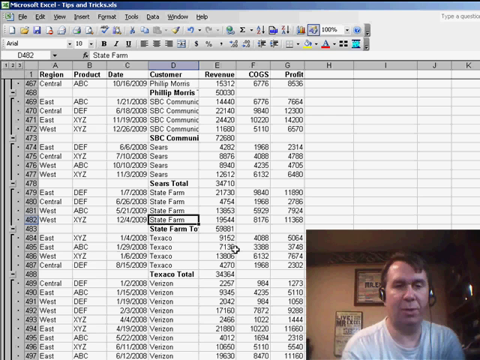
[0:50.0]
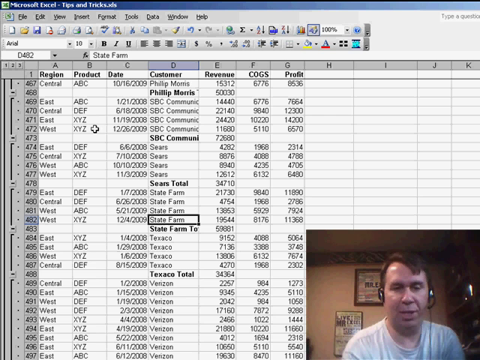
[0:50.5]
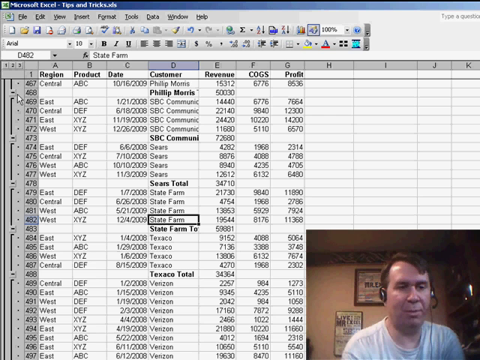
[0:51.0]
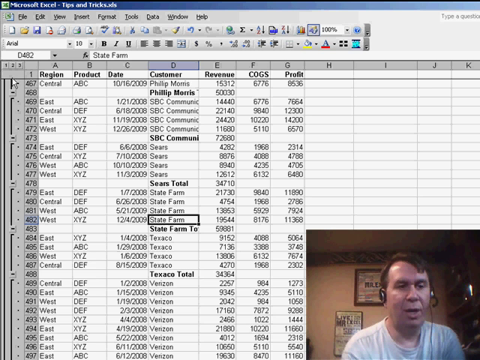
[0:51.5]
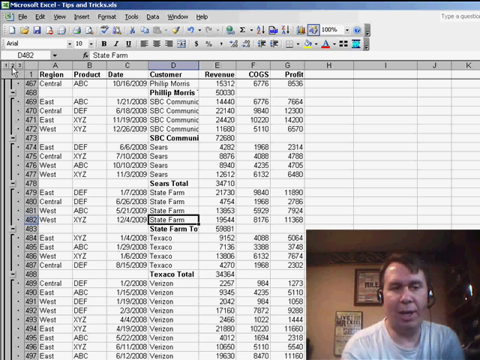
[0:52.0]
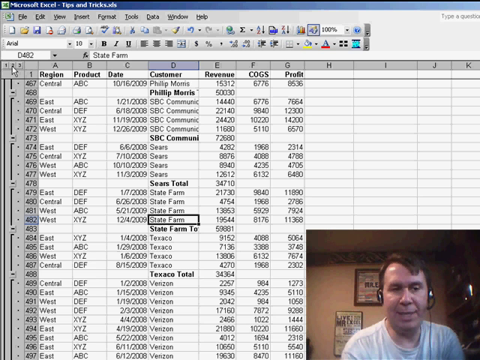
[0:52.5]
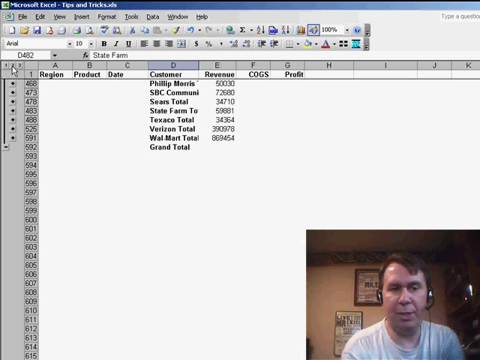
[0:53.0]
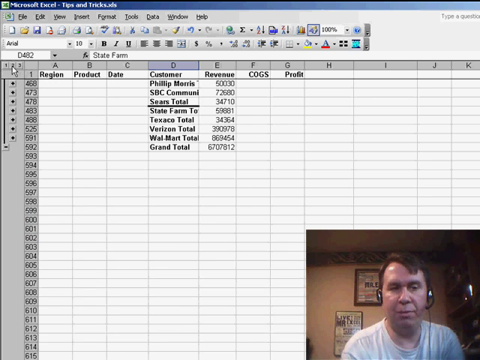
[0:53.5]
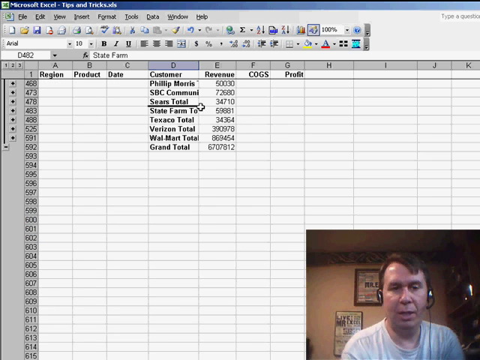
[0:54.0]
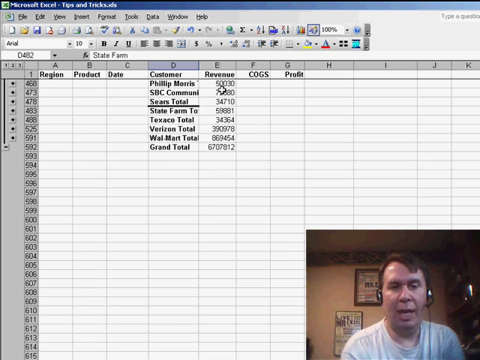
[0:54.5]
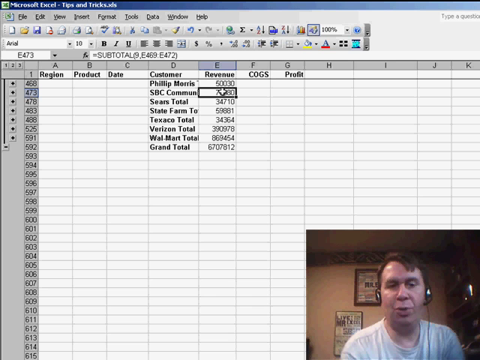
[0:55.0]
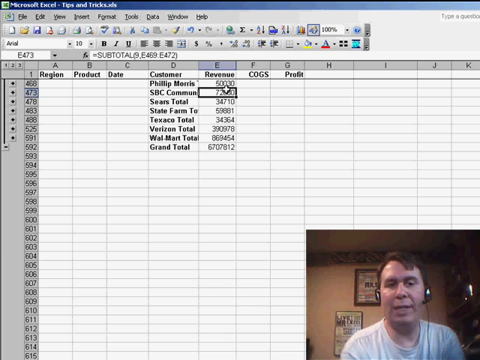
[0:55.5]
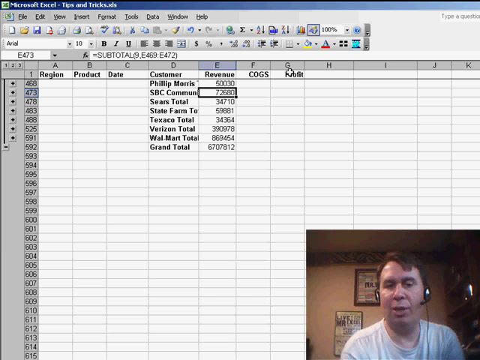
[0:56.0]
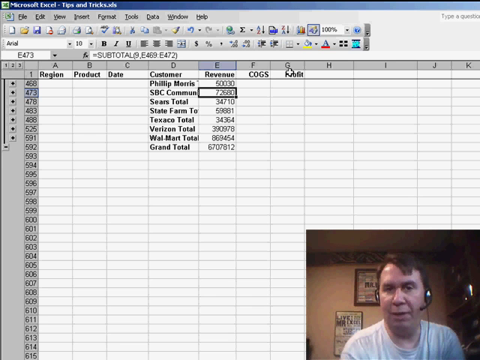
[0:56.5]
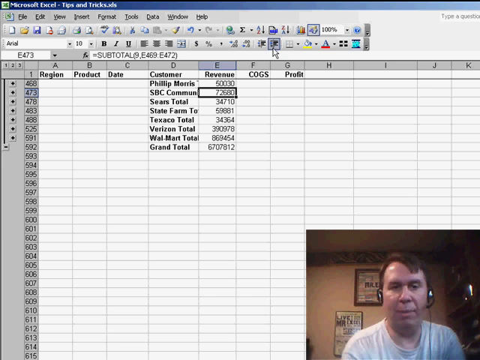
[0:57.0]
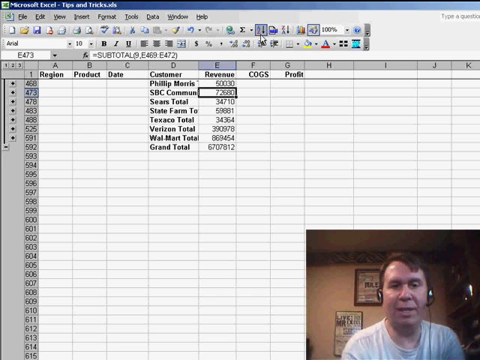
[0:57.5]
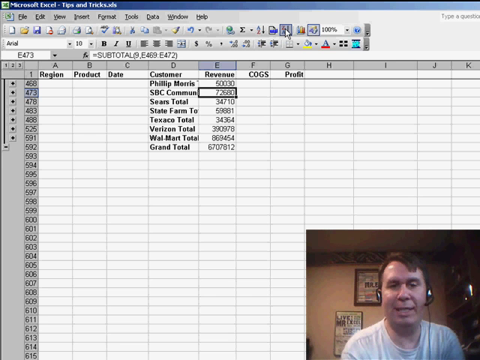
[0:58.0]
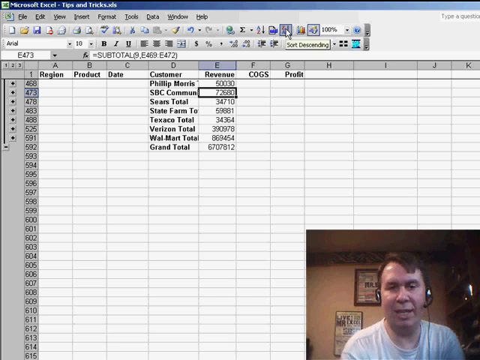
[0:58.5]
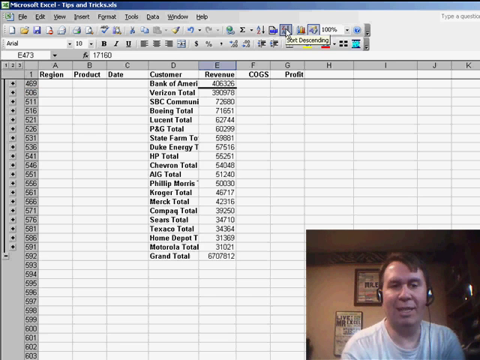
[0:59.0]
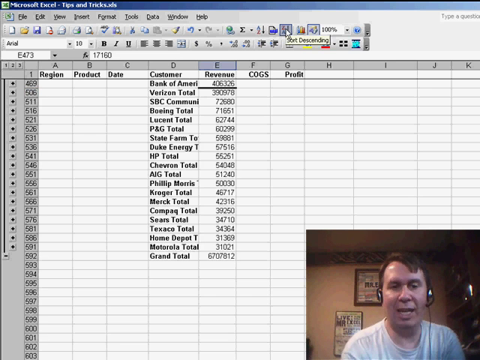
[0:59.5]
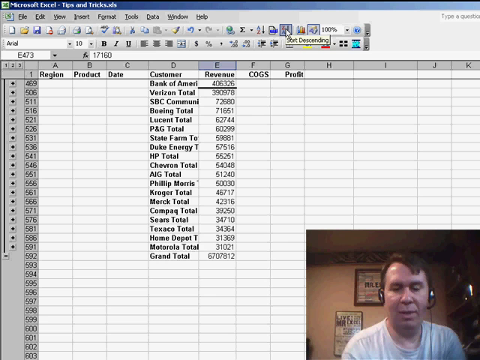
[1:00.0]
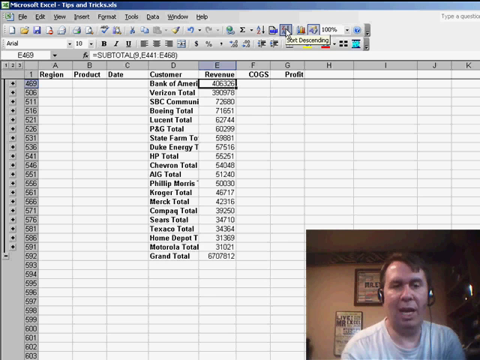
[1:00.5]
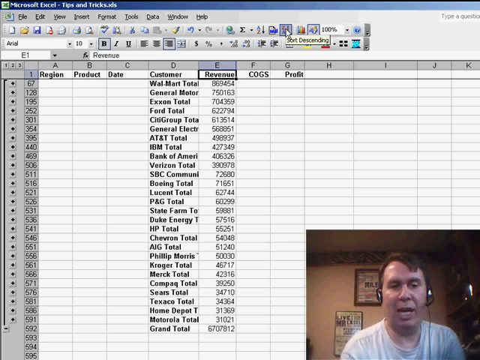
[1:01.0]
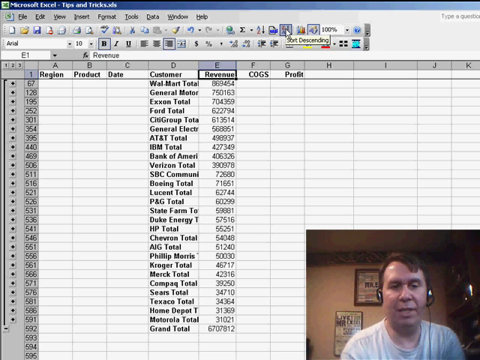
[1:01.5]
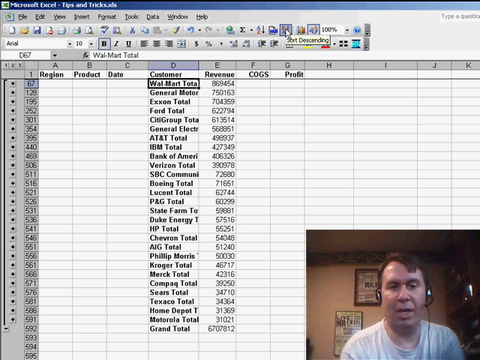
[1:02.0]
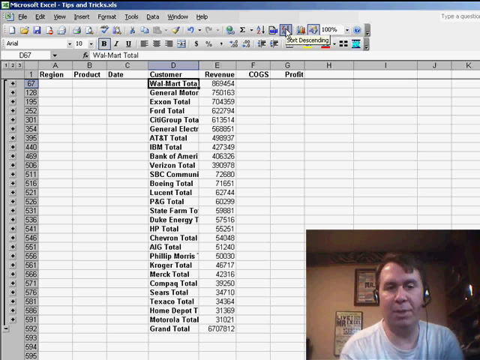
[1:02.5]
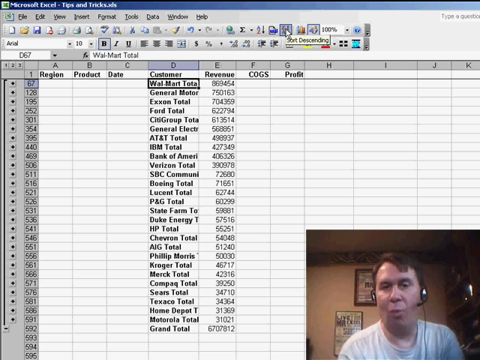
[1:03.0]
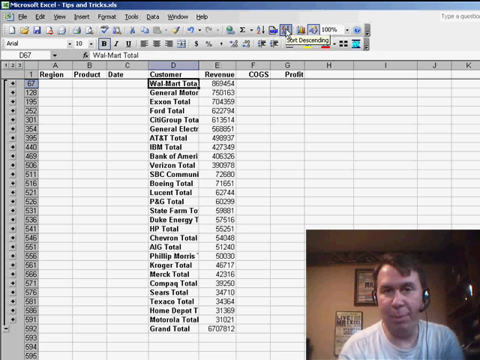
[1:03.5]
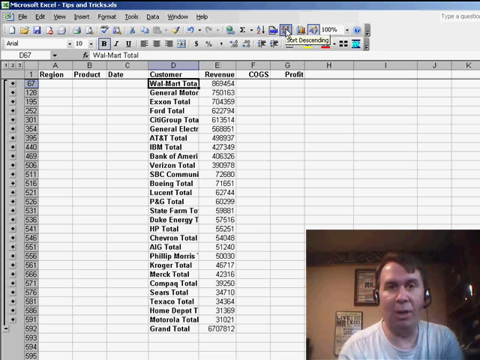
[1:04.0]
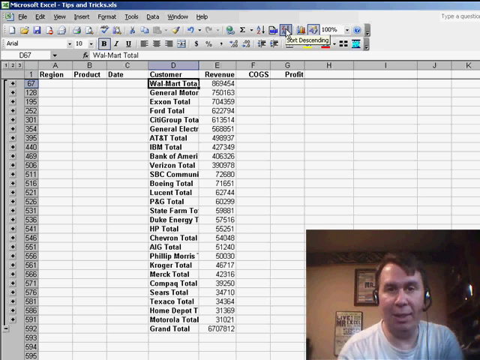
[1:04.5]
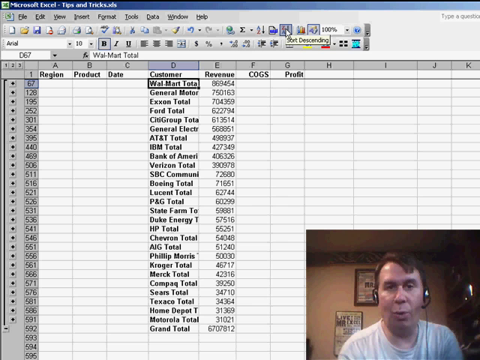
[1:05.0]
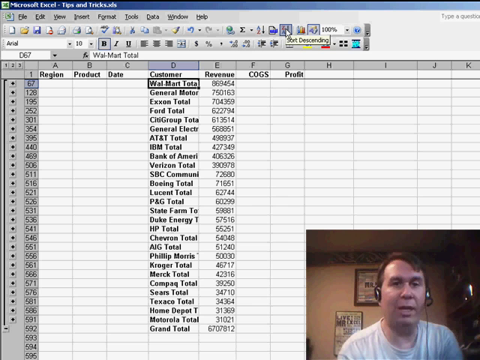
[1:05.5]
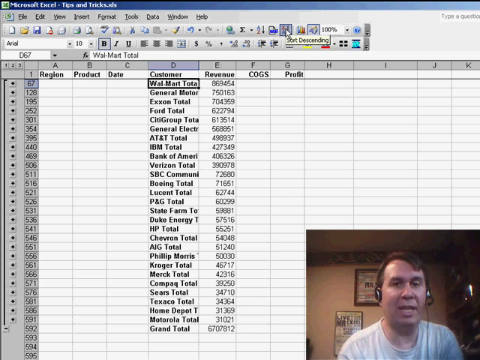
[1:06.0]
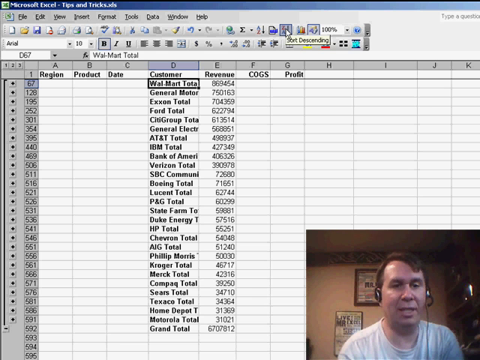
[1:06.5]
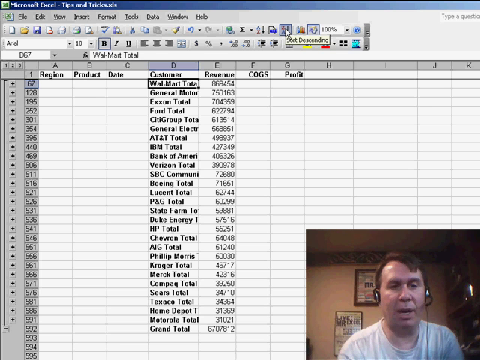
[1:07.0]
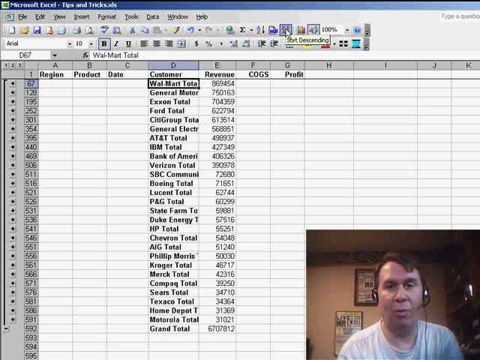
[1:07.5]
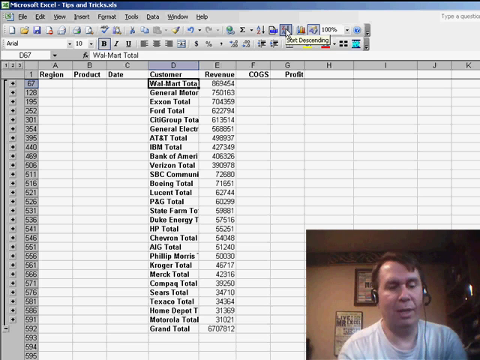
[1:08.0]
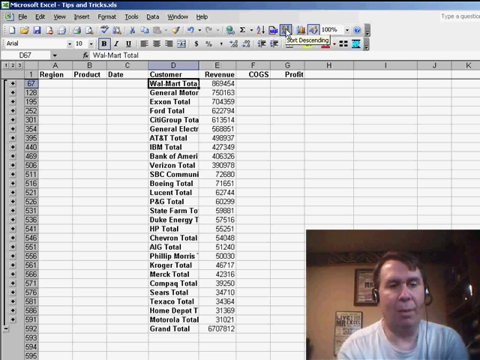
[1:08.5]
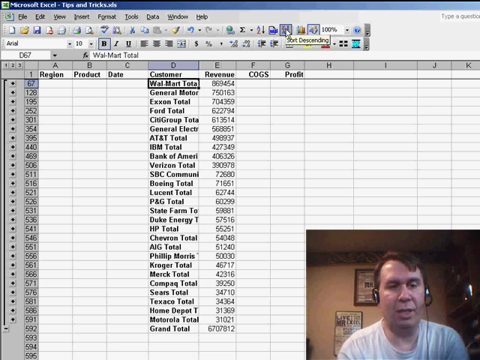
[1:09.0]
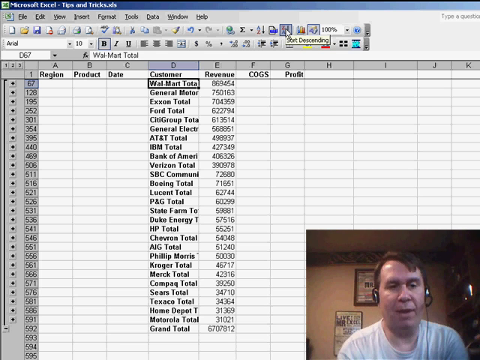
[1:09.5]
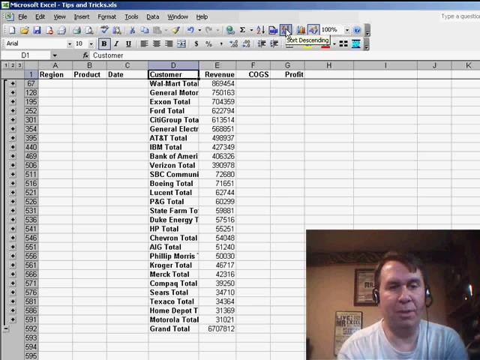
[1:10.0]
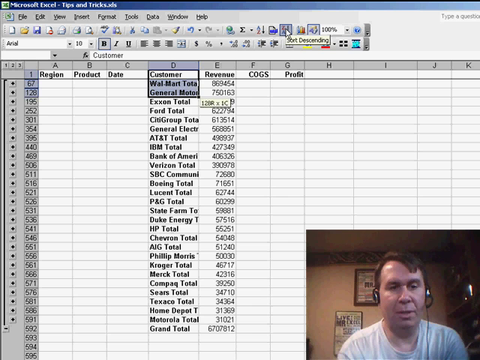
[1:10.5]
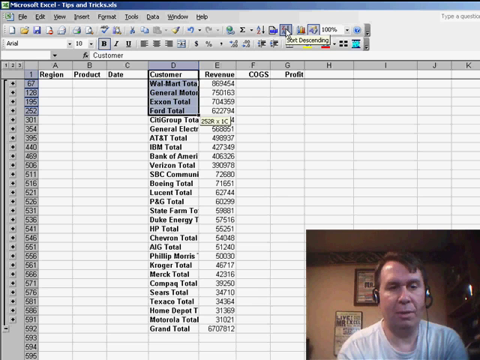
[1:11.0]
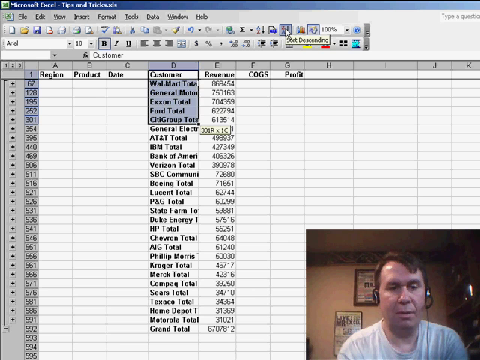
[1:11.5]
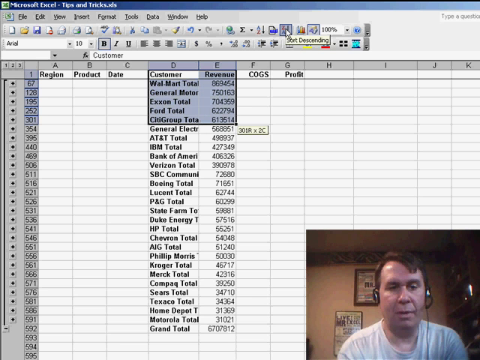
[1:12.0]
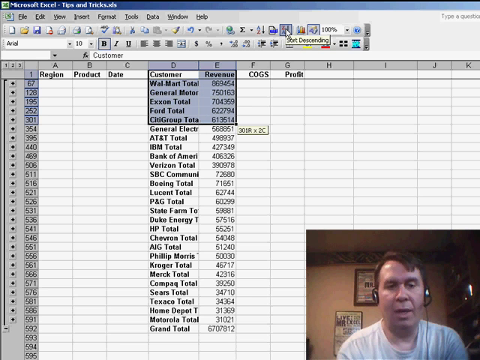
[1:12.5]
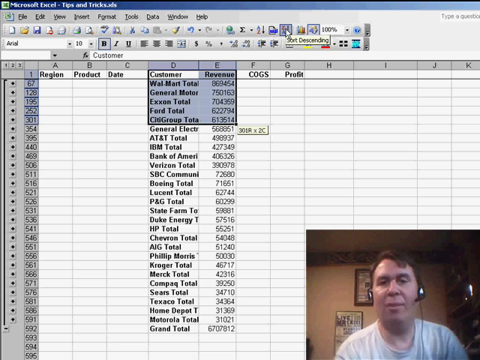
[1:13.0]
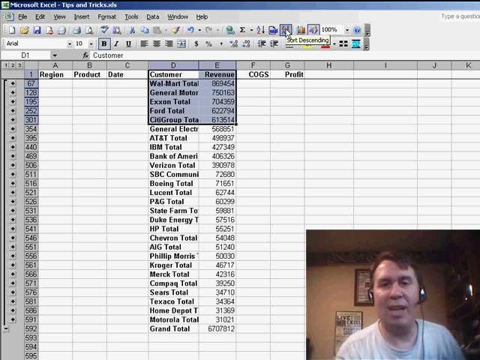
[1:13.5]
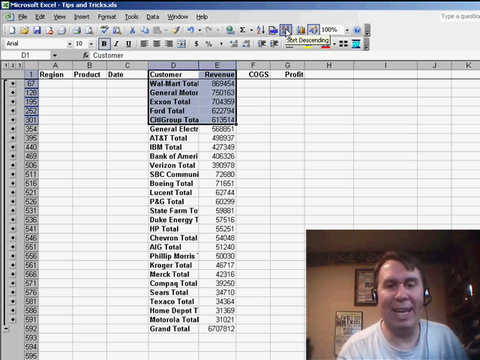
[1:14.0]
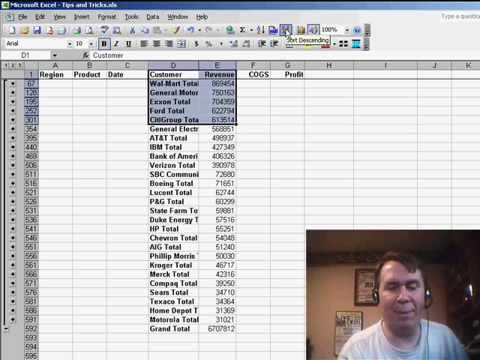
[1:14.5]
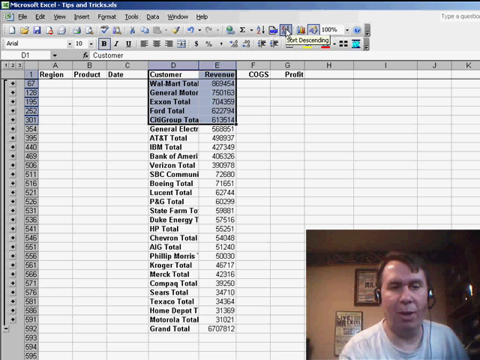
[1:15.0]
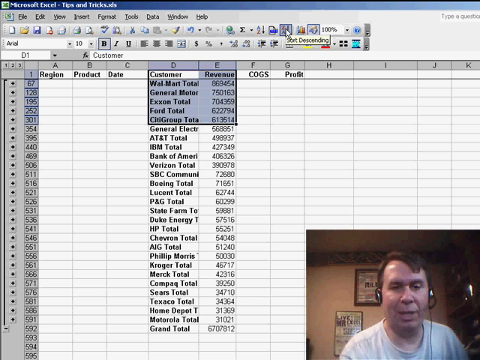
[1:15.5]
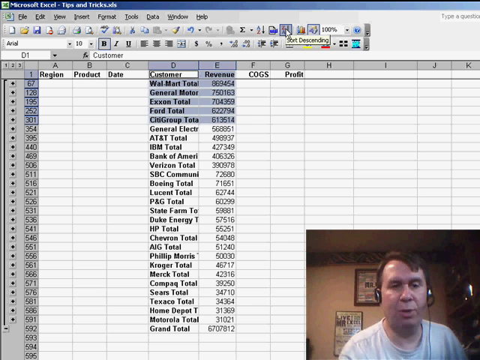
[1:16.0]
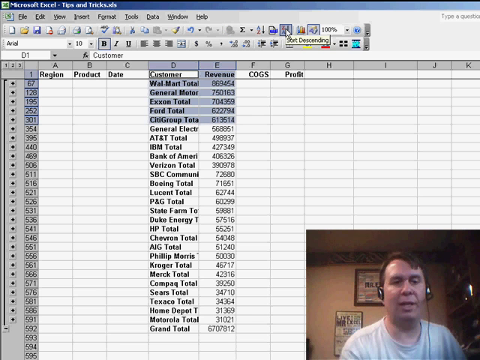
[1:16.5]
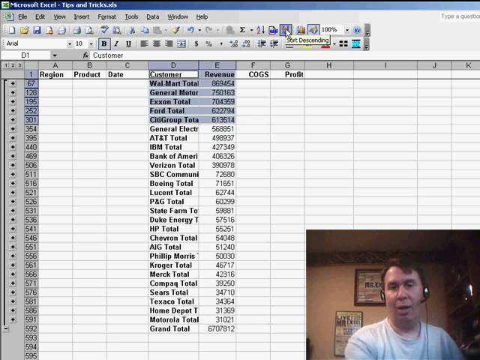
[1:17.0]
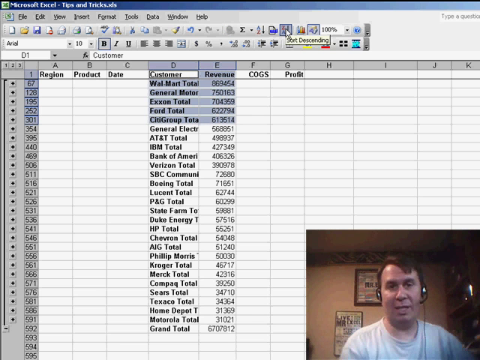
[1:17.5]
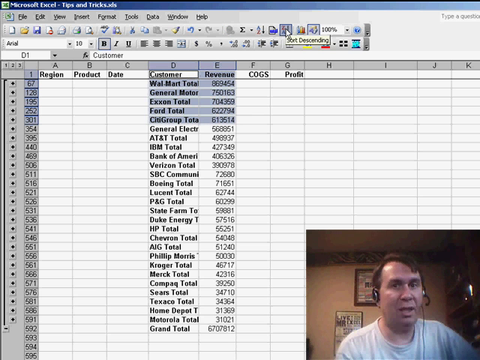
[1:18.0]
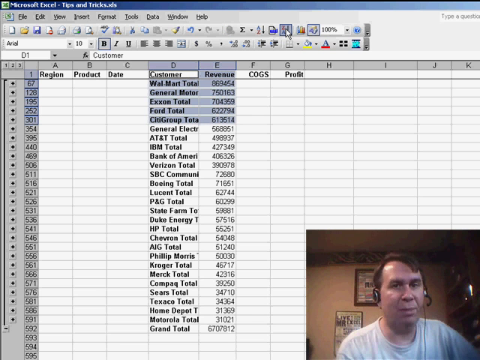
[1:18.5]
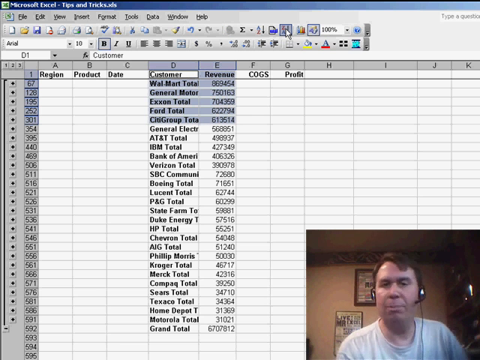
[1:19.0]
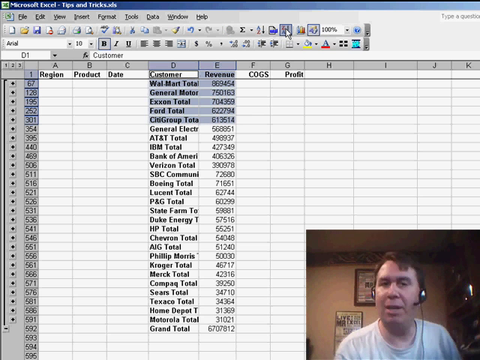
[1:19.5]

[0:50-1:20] In the top left-hand corner, just above the data in the spreadsheet, are the numbers 1, 2 and 3, and the cursor goes to 2 and clicks it. This removes some of the data but leaves the customer and revenue columns, D and E, populated, showing the revenue for each customer. The image is very blurry, but Philip Morris appears to be 50,030; Sears' total is 34,710 and Texaco's total is 34,364. He then clicks sort descending, which puts the highest revenue at the top of the list, the lowest at the bottom, and the grand total below this. Walmart appears to have the highest revenue and Motorola the lowest. He then highlights five rows of the table: Walmart, General Motors, Exxon Total, Ford Total and Citigroup Total.